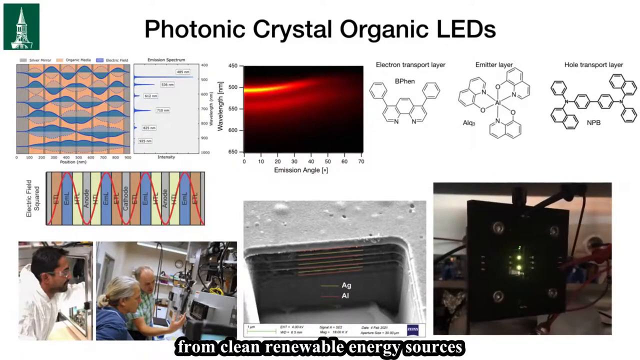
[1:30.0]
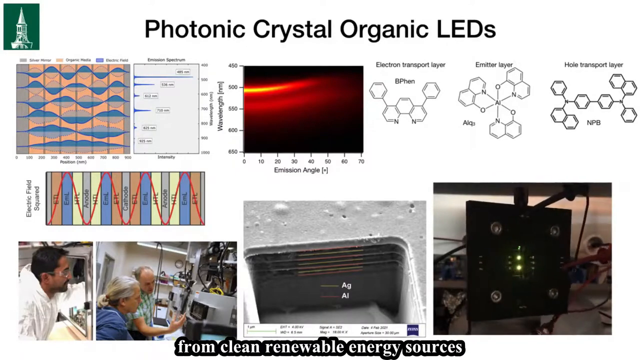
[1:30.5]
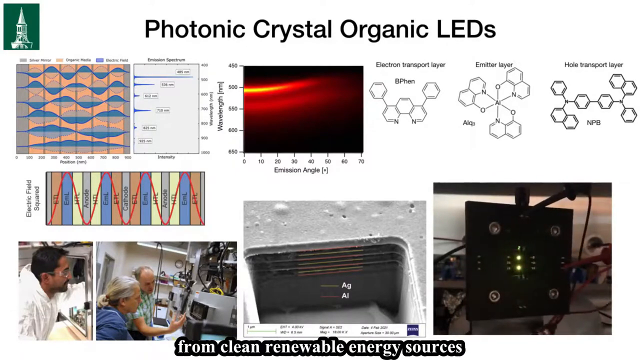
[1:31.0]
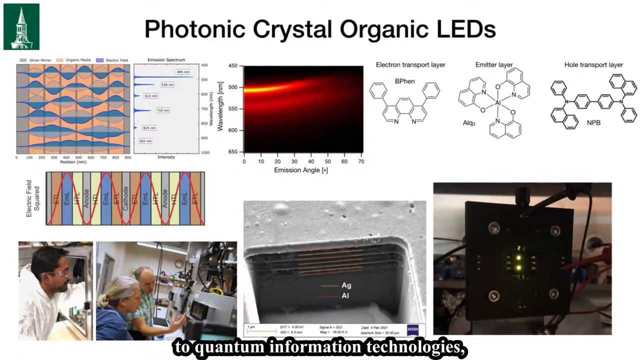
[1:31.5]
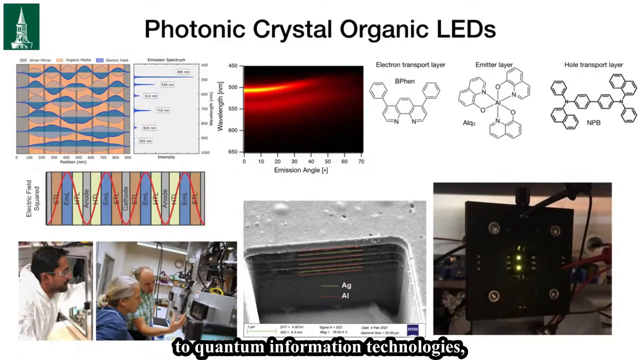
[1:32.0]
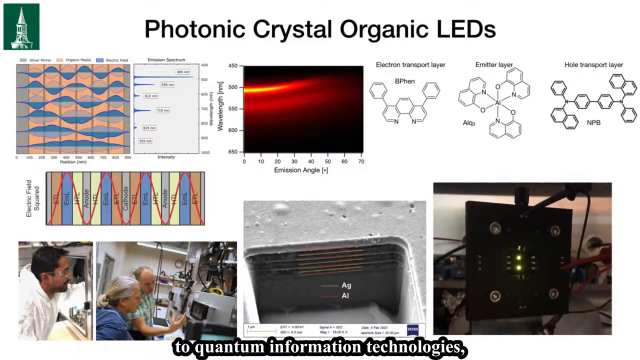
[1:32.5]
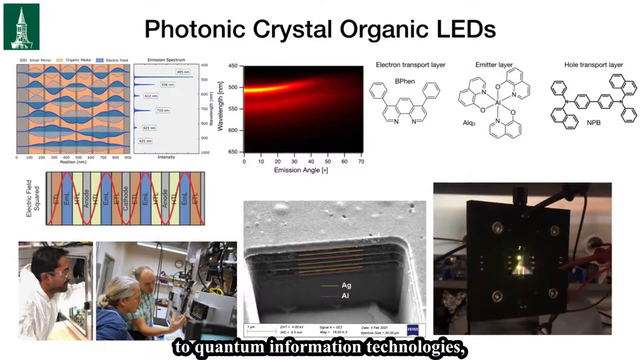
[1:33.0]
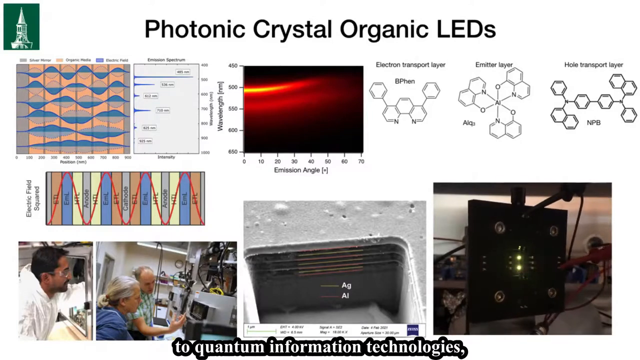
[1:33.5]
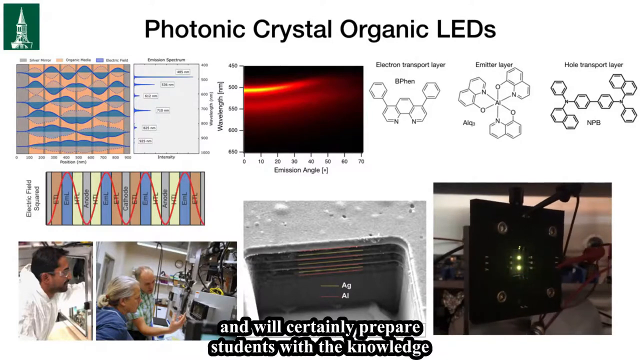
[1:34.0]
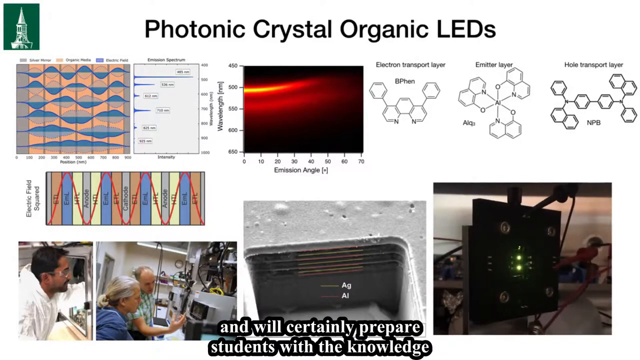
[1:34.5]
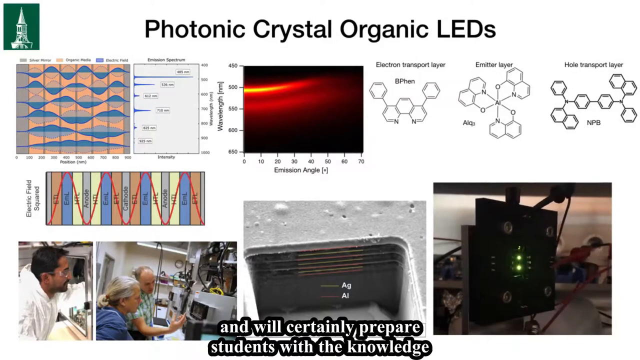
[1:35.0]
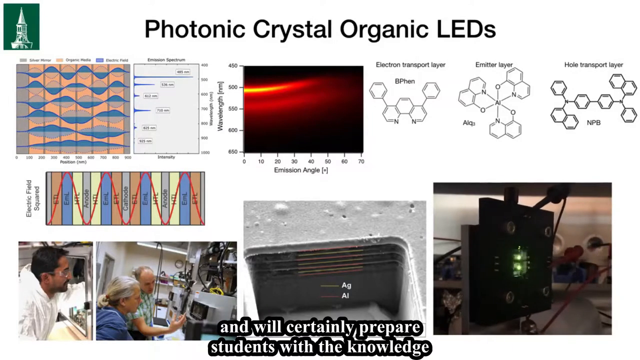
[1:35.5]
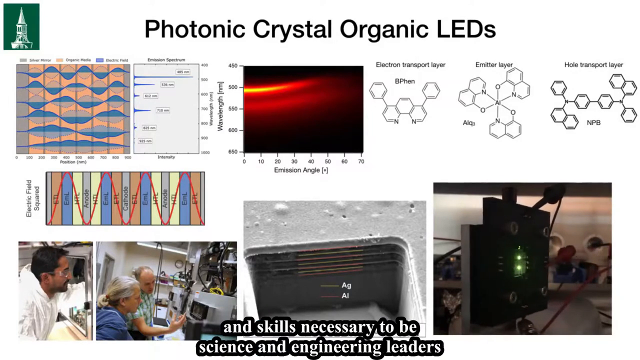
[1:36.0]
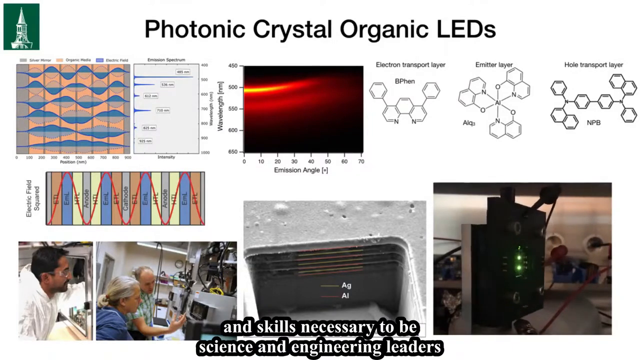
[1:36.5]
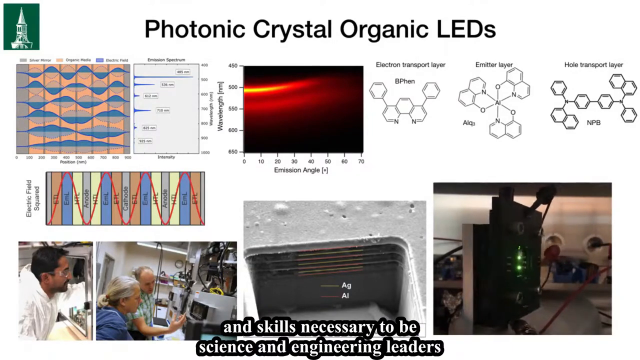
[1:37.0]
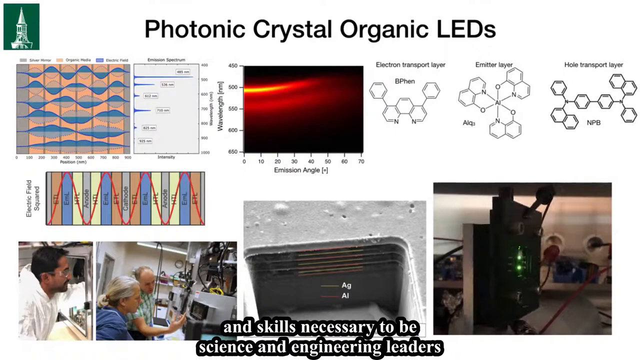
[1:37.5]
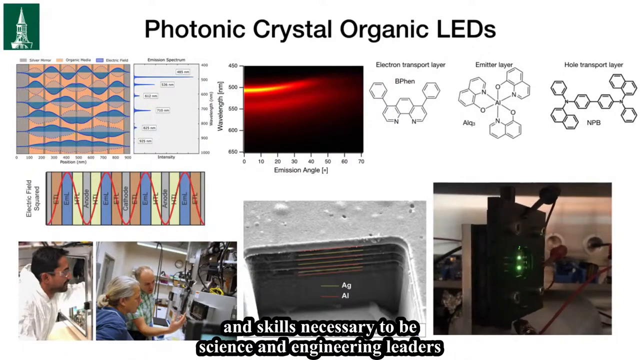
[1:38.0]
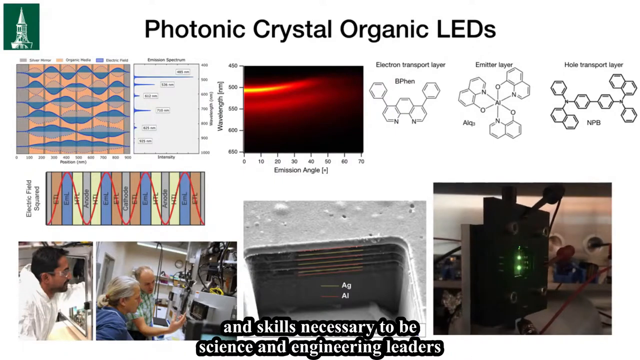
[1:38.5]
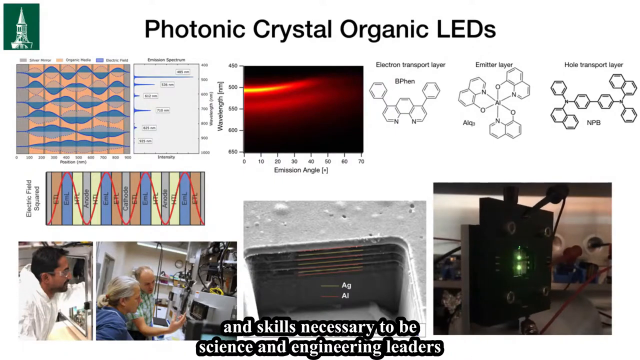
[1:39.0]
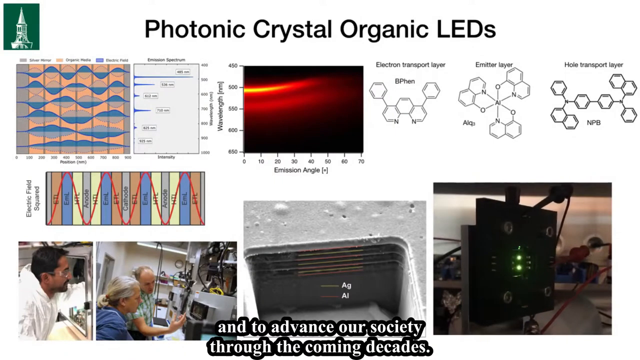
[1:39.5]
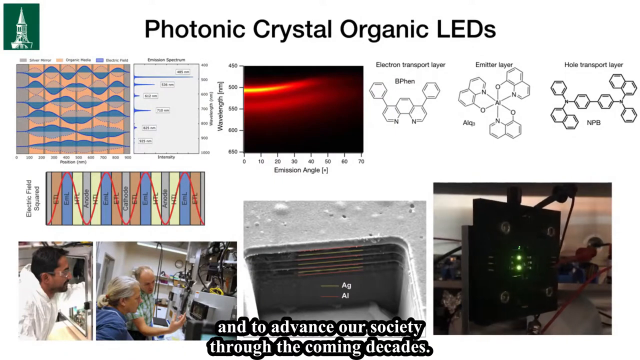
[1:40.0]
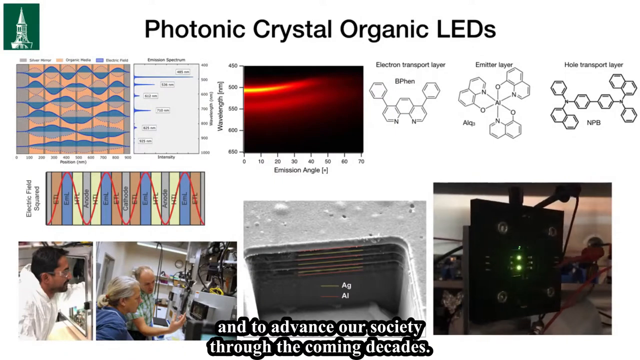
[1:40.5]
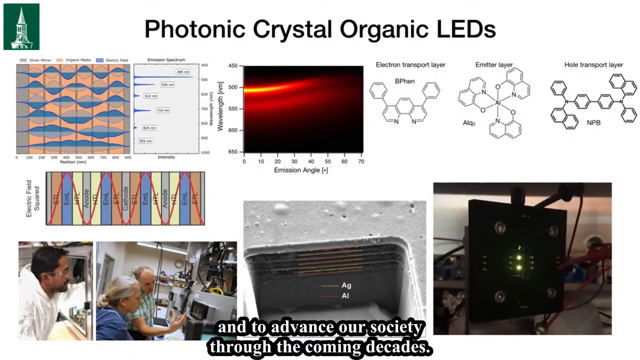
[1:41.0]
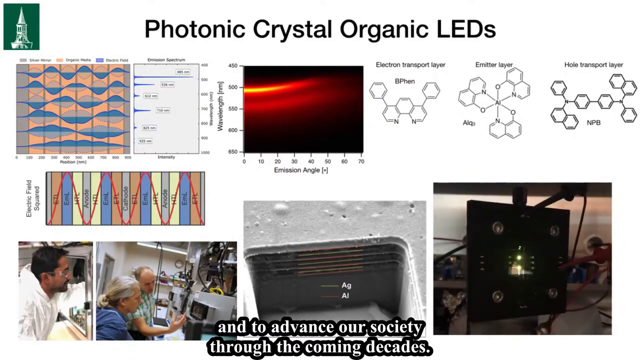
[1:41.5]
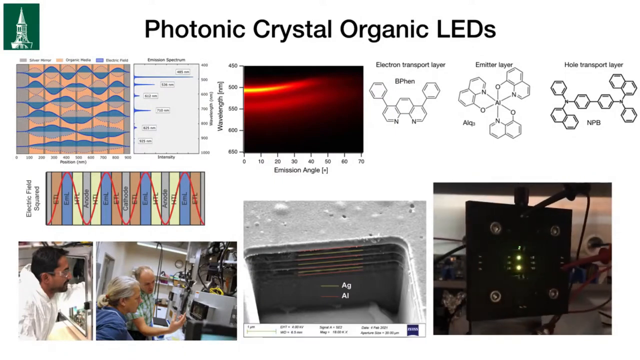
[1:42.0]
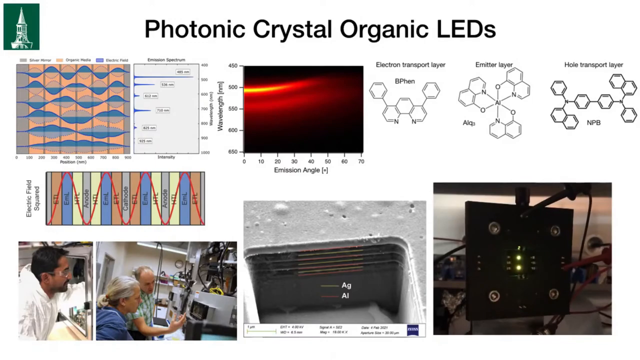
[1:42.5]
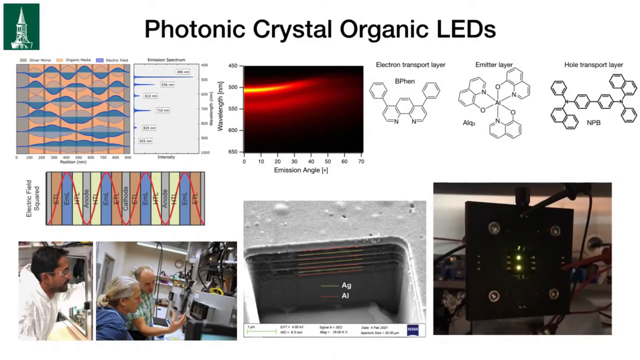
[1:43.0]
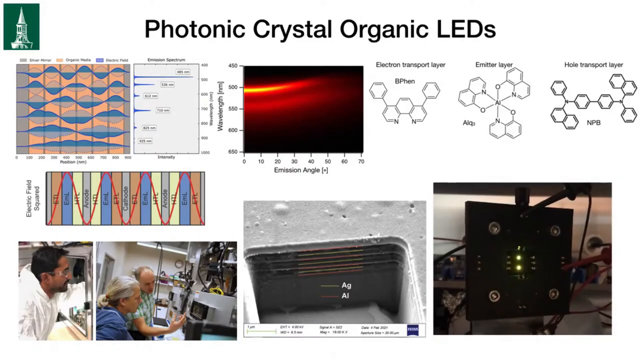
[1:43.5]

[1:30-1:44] Assistant Professor Matthew White continues his presentation on photonic crystal organic LEDs, with several graphs and images displayed: a bar graph, a graph titled "electric field squared," and an image of individuals working in a lab, one of whom wears a white lab coat. Another device is turning. He talks about the electron transport layer, the emitter layer and the hole transport layer, about preparing his students with the skills necessary for science and engineering careers and to be leaders in engineering, and about advancing society through this work.